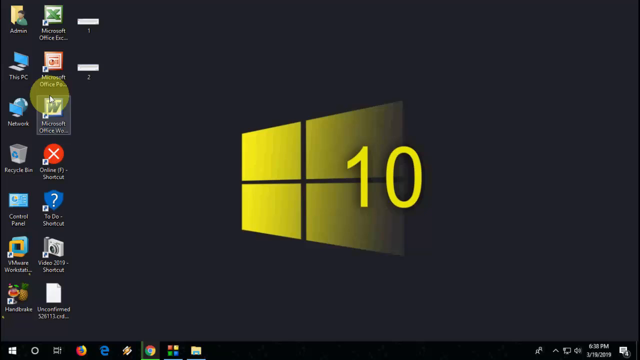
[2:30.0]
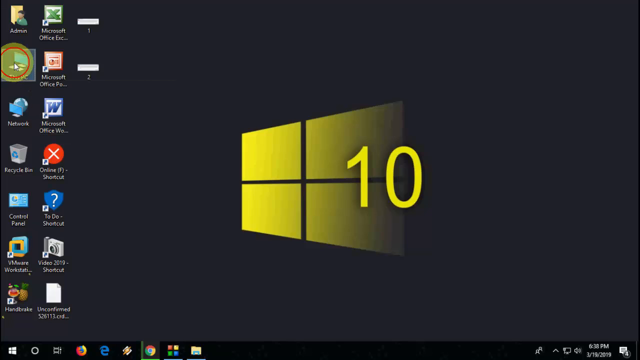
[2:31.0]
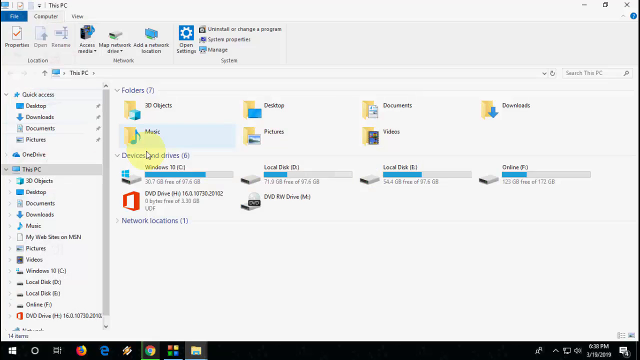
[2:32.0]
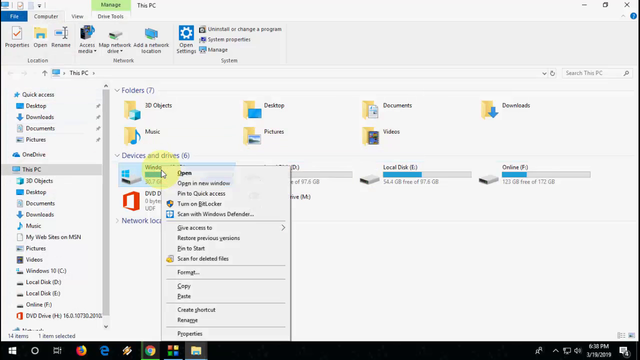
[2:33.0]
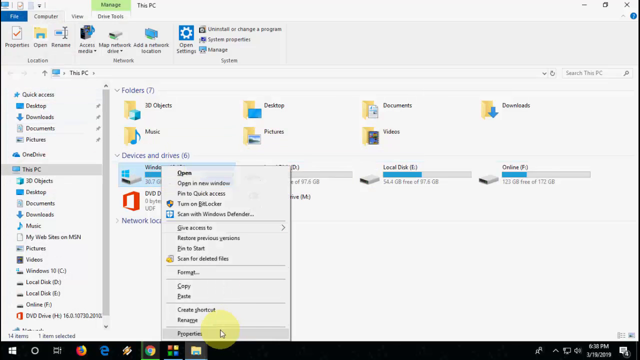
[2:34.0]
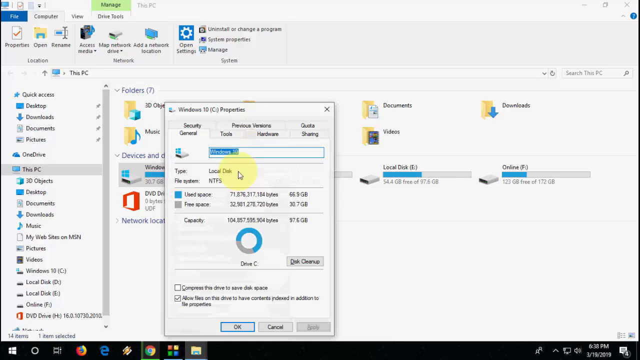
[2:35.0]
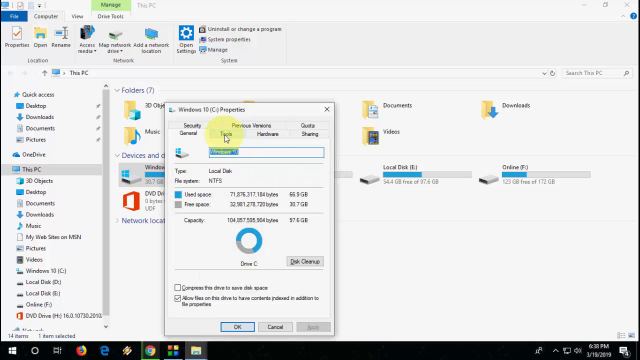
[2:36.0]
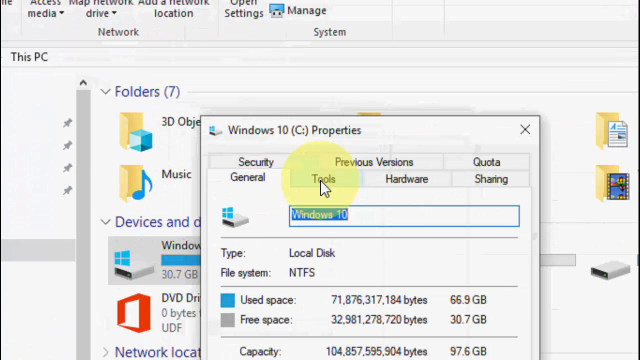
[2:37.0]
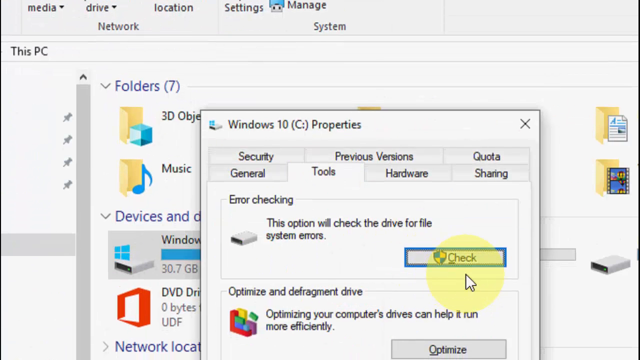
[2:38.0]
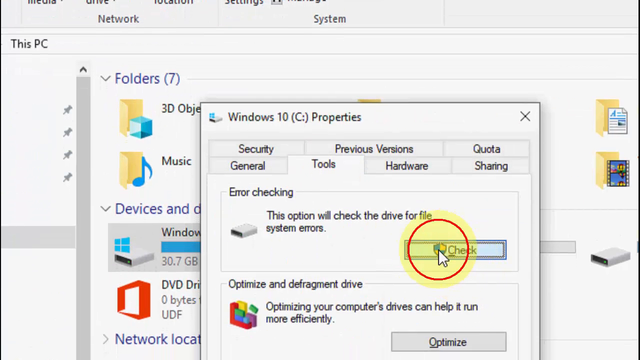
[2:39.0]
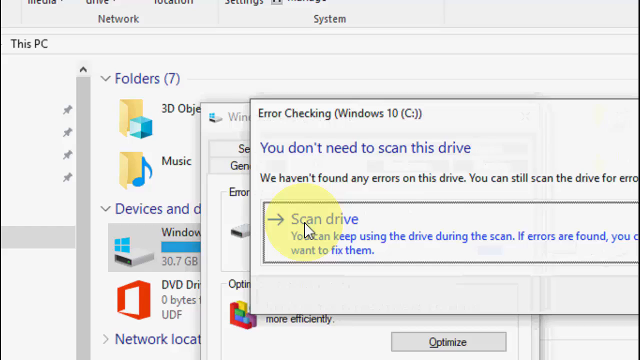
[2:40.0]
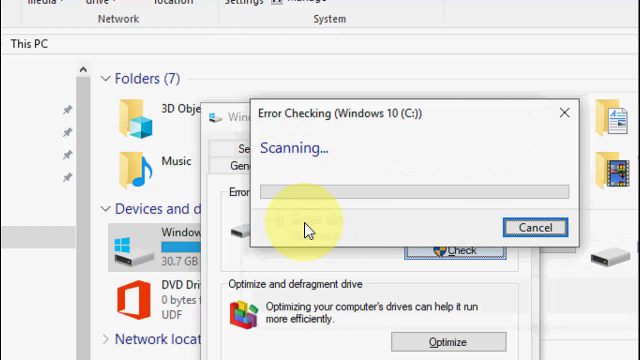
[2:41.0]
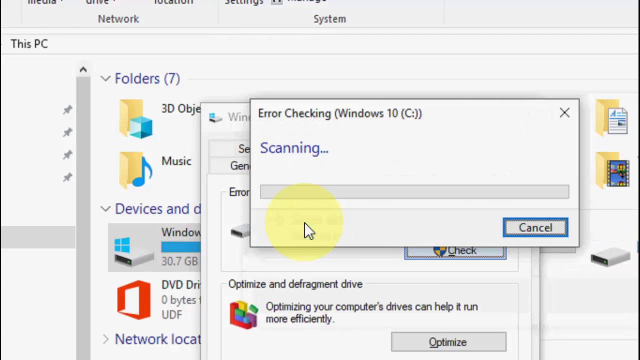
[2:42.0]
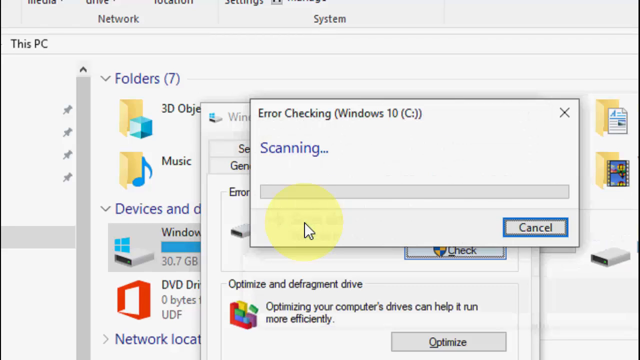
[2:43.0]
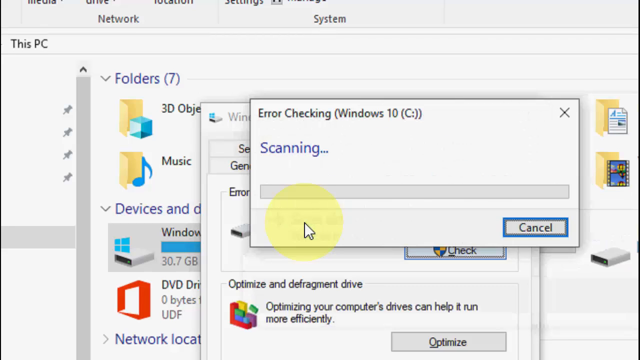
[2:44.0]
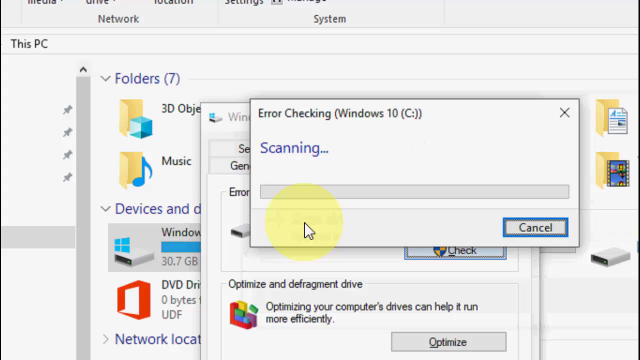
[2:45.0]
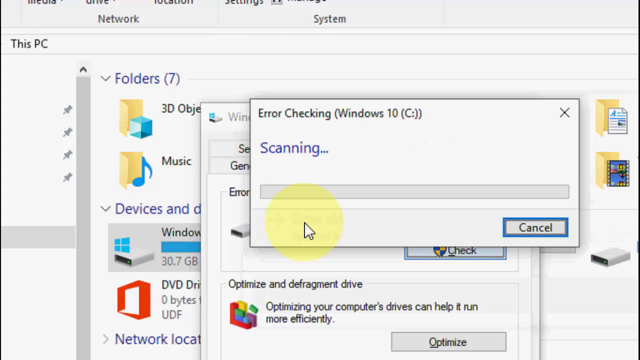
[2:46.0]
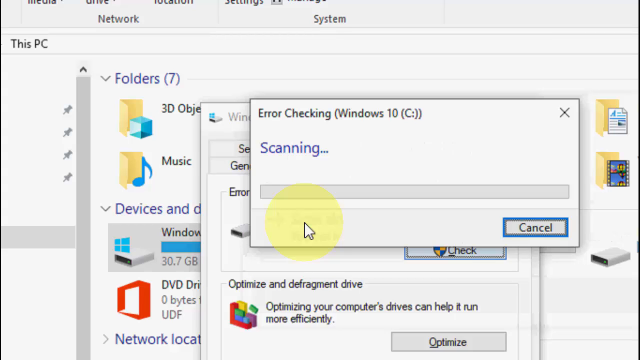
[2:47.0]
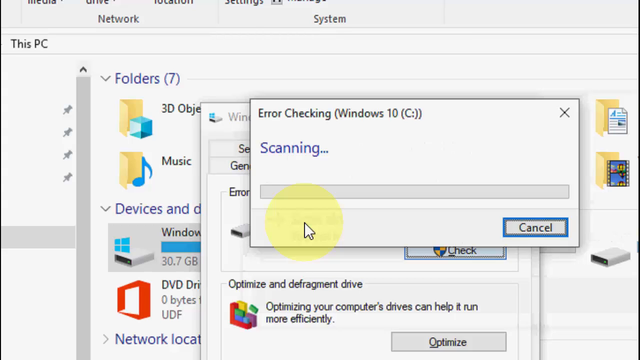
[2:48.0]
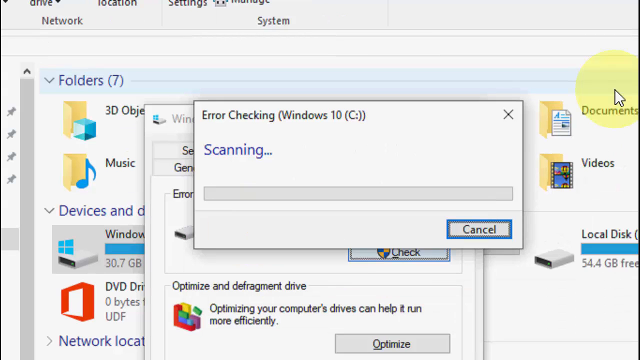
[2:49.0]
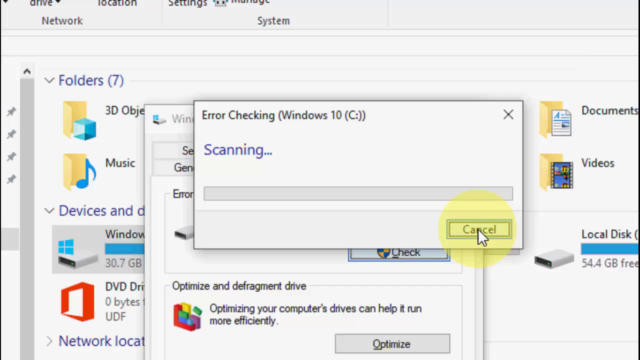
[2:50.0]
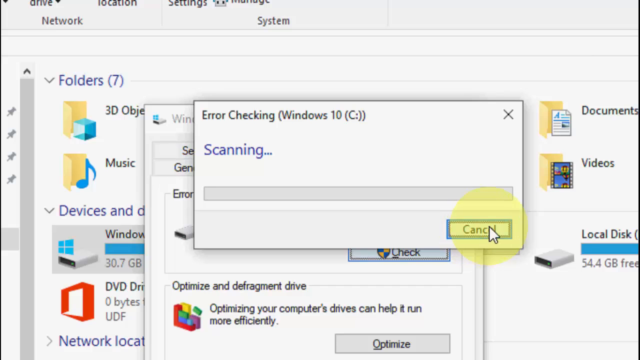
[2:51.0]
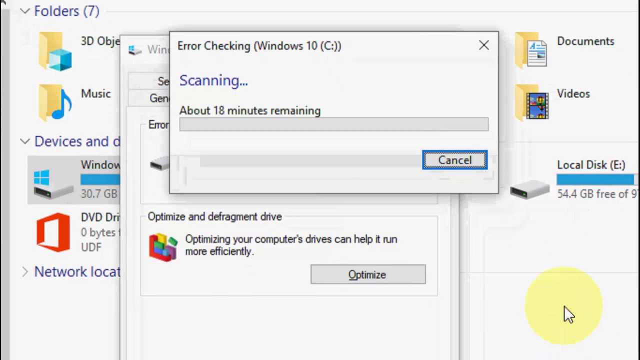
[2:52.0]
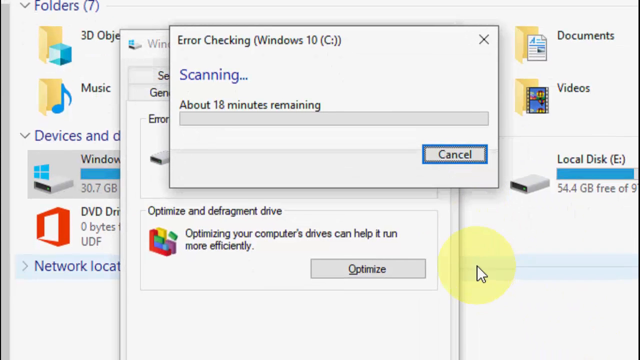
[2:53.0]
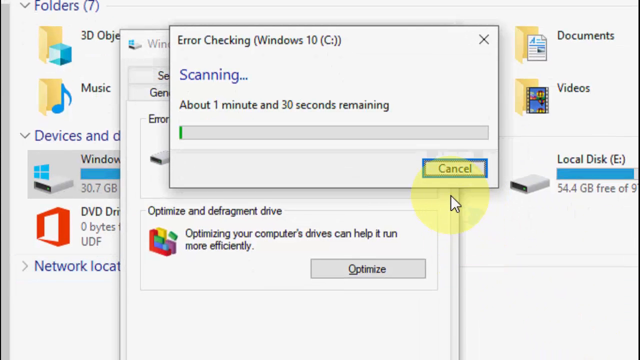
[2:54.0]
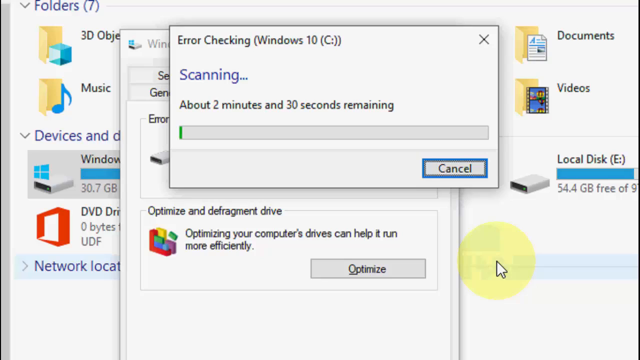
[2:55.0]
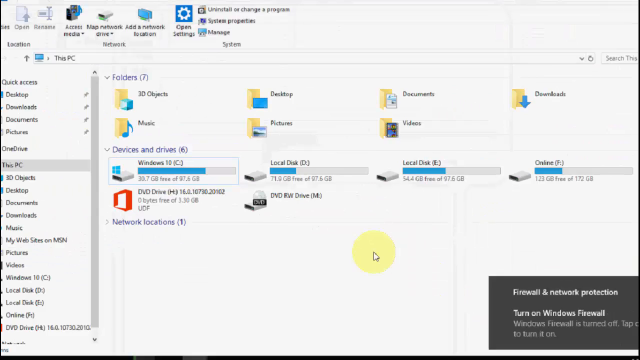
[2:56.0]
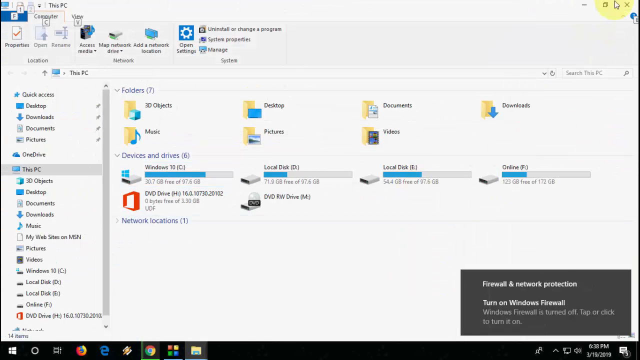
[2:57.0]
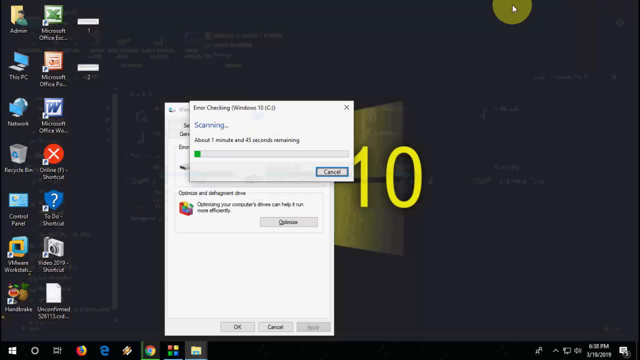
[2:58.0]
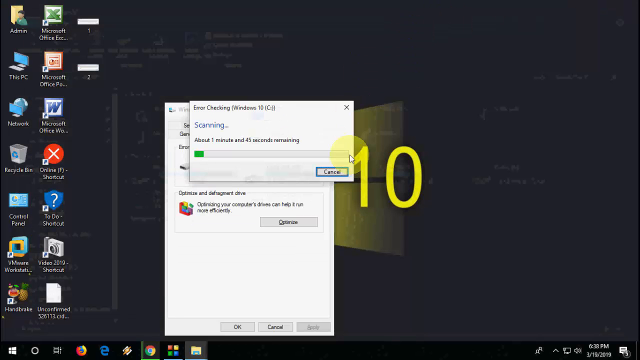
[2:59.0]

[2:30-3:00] A recording of a Windows PC desktop shows a solid black background with the Windows logo in the center, turned yellow, with a yellow 10 on it. On the left side are two columns of seven shortcuts each and a third column with just two photos. The mouse cursor, highlighted by a yellow circle, starts over the Windows Microsoft Word Office shortcut and moves to This PC. A double-click on This PC makes a red circle appear and opens the This PC folder. The user navigates to the Windows C drive, right-clicks it, clicks the Tools tab in the window that pops up, and clicks the Check option under the section that reads "Error Checking". Scanning the drive opens an "Error Checking Windows 10 C drive" scanning box that says "Scanning" with a Cancel button at the bottom. The scan shows about two minutes and 36 seconds remaining. The user closes the folder window but leaves the error checking scanning box open.